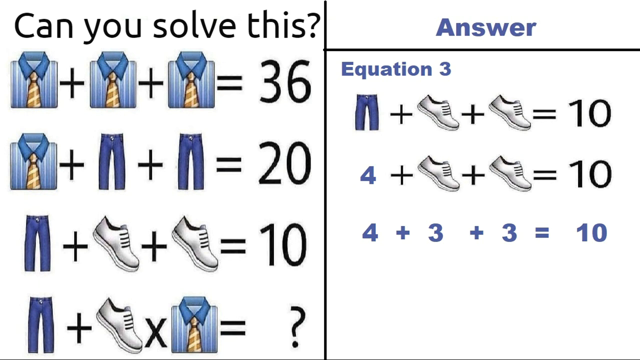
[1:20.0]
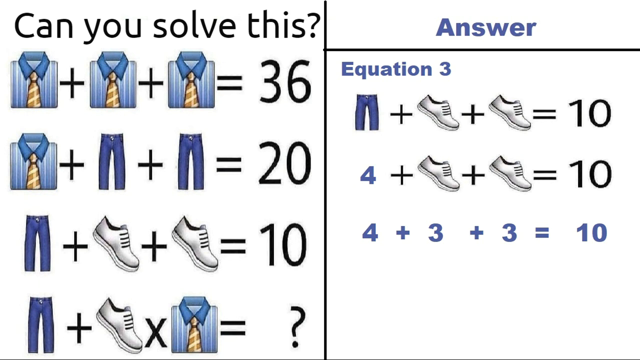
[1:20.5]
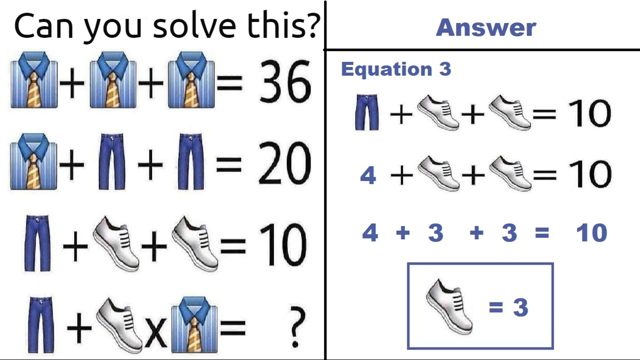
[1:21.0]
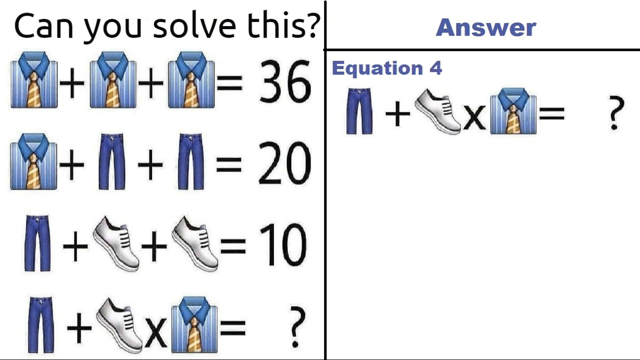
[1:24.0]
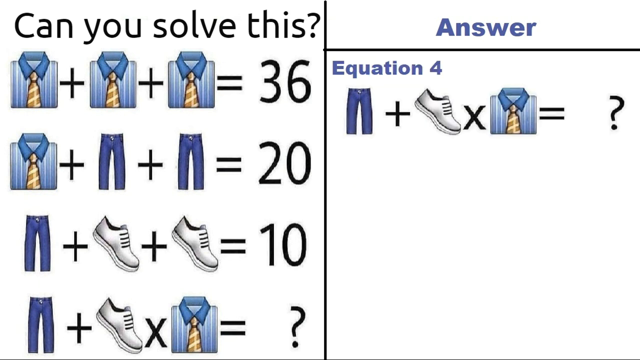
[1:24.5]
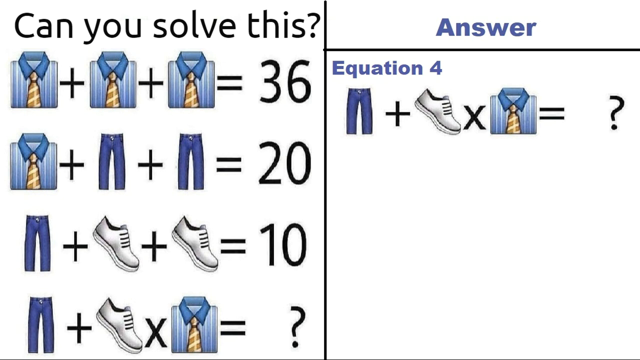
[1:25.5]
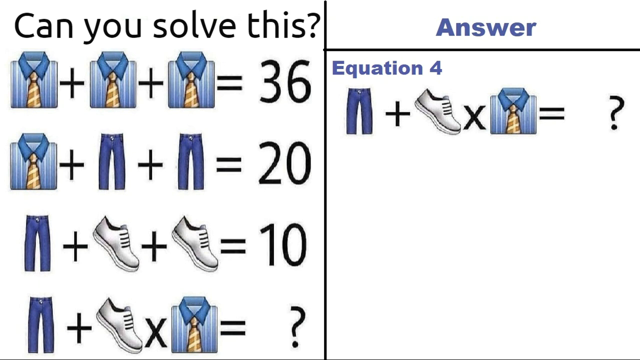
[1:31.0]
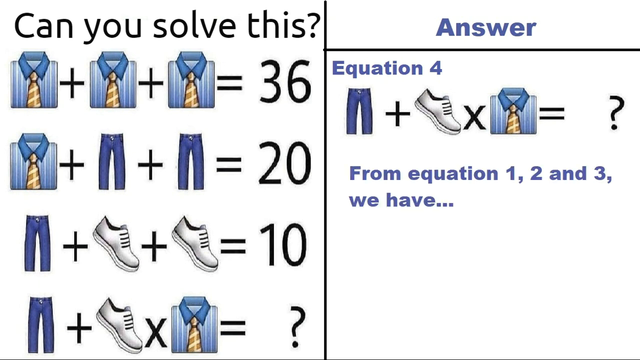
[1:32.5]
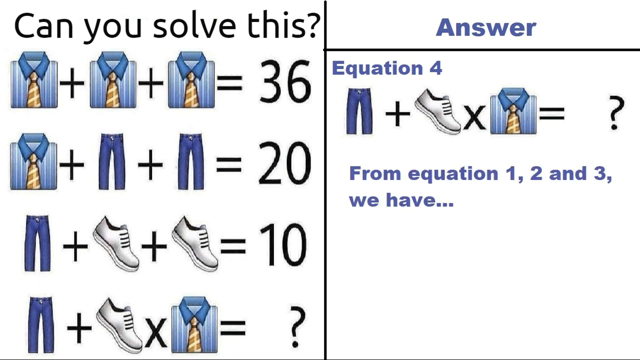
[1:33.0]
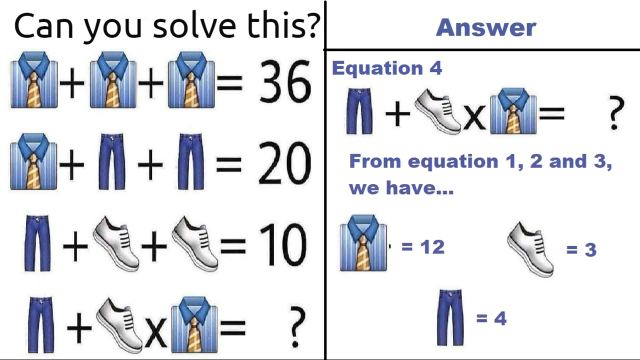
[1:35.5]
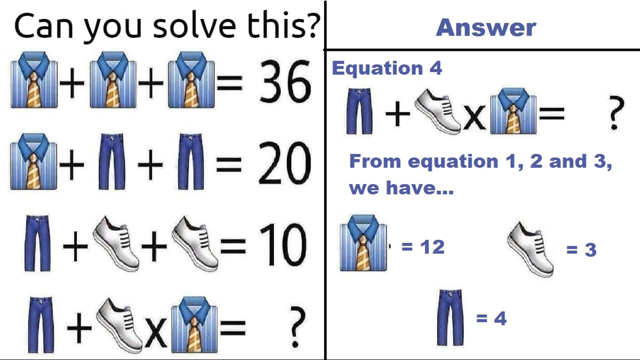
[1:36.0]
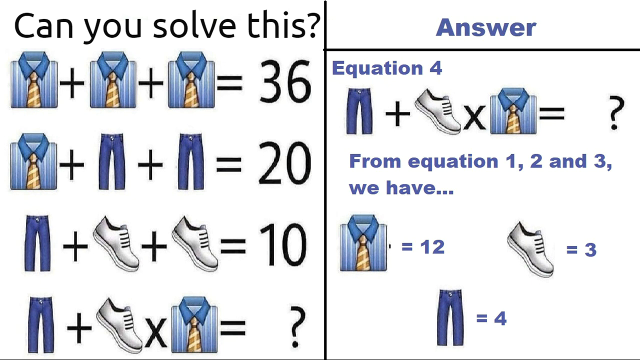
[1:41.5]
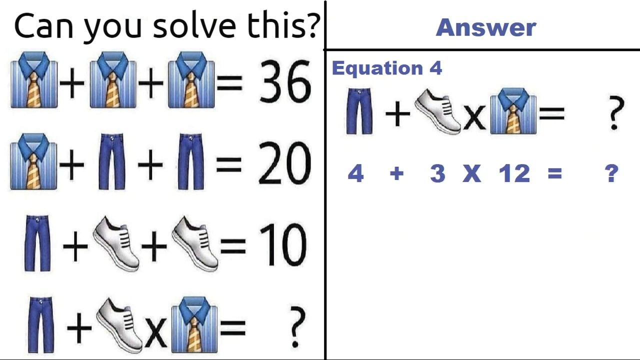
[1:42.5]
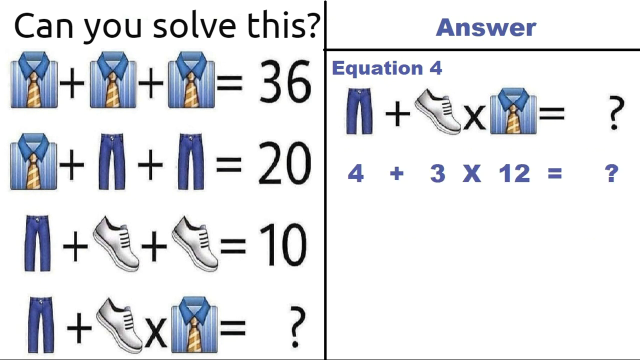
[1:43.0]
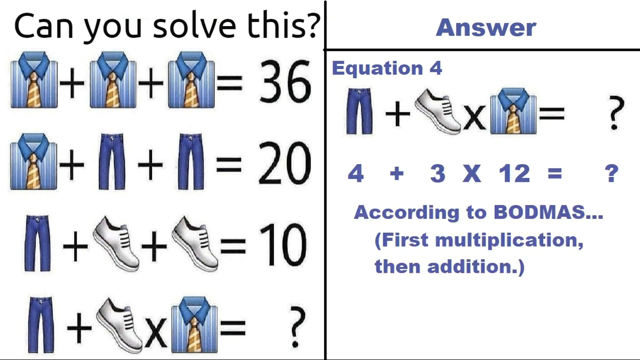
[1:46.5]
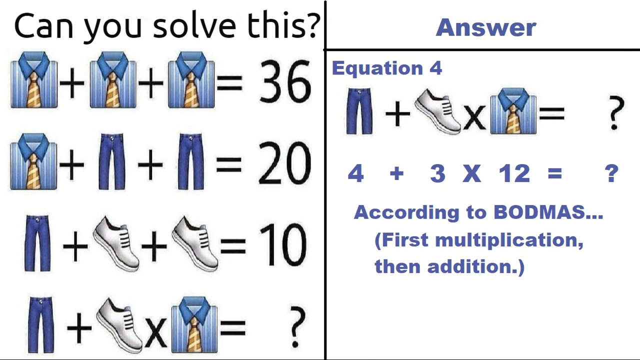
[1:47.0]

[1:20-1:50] Shortly after, beneath the equation four plus three plus three equals 10, the line shoe equals three appears in a white square bordered by dark blue lines. The screen then switches to equation 4, with the heading Equation 4 in dark blue and the equation 1 pants plus shoe times striped shirt equals question mark, with the symbols all in black. About six seconds later a new line appears reading "From equation 1, 2, and 3, we have". Beneath it, one striped shirt equals 12 is on the left and one shoe equals three is on its right, and beneath both, in the middle, is one pants equals four. All the letters are in dark blue. The symbols then disappear and are replaced by the equation 4 plus 3 times 12 equals question mark, all in dark blue. Below this equation it reads "According to BODMAS", followed by a quick explanation: "First multiplication, then addition."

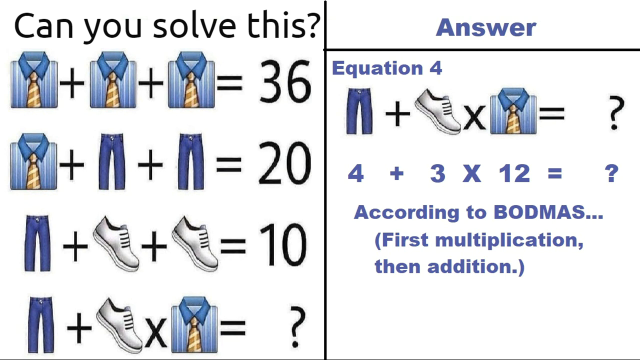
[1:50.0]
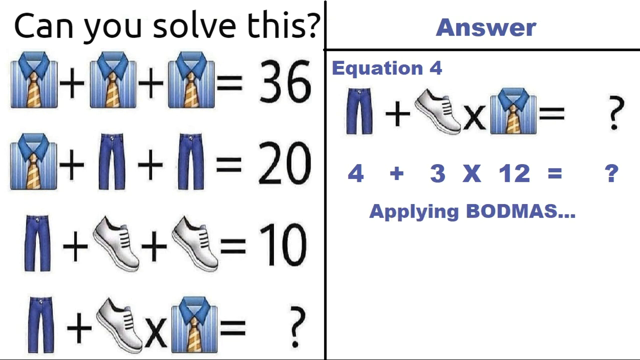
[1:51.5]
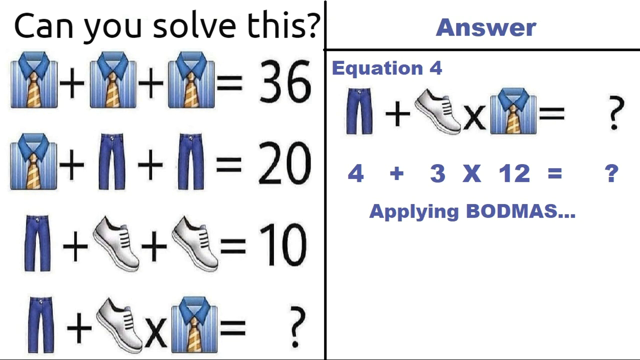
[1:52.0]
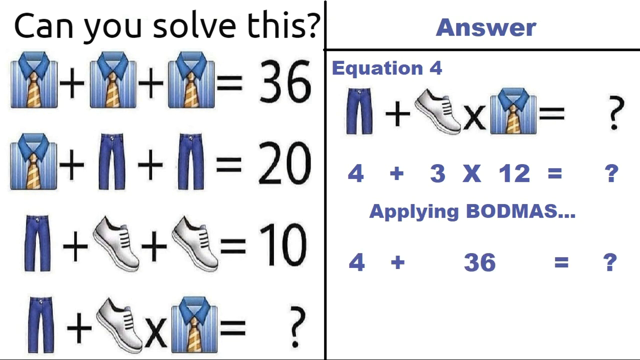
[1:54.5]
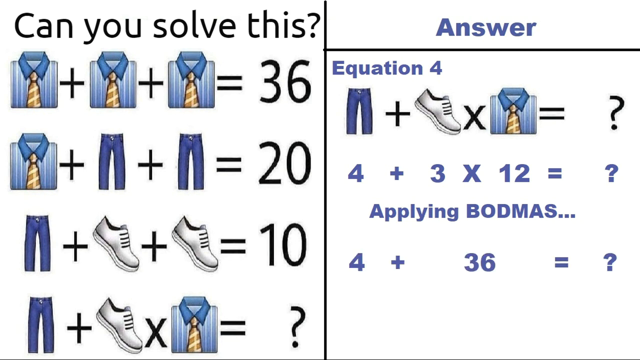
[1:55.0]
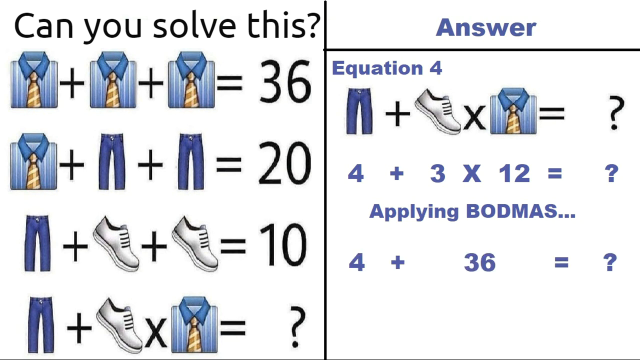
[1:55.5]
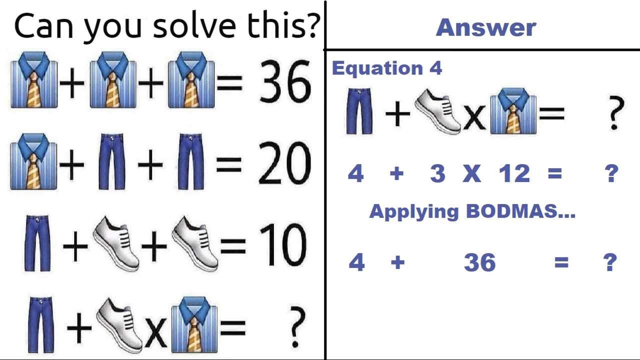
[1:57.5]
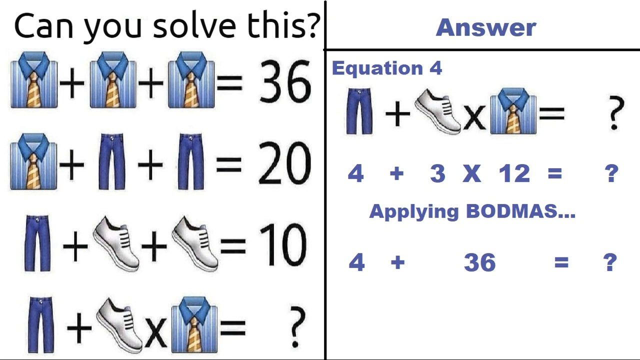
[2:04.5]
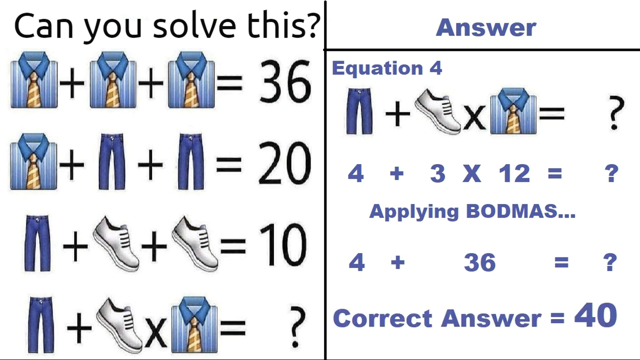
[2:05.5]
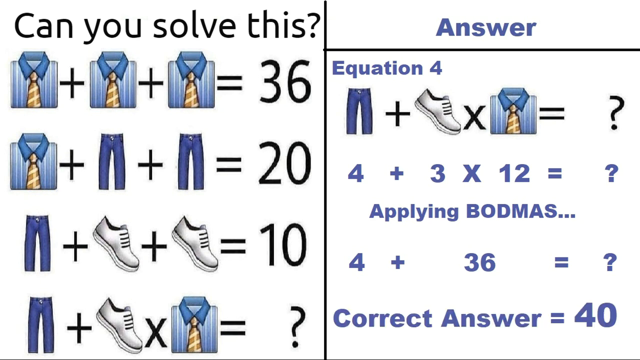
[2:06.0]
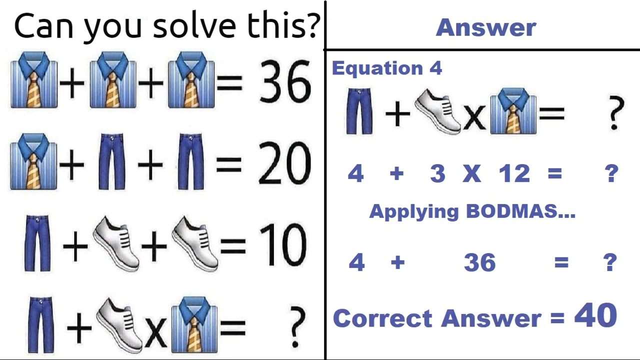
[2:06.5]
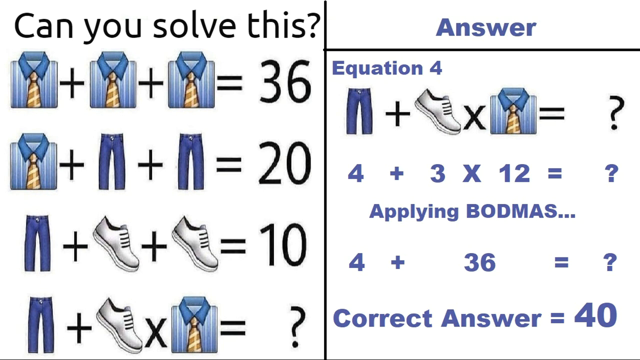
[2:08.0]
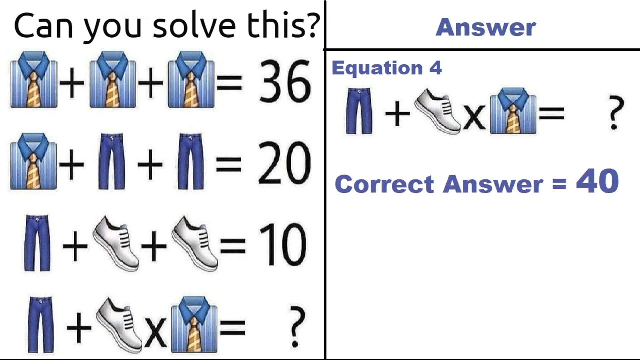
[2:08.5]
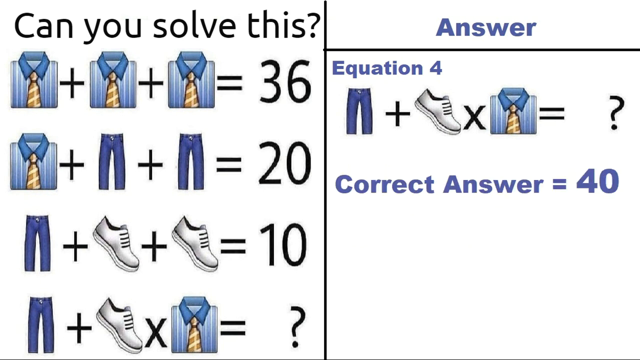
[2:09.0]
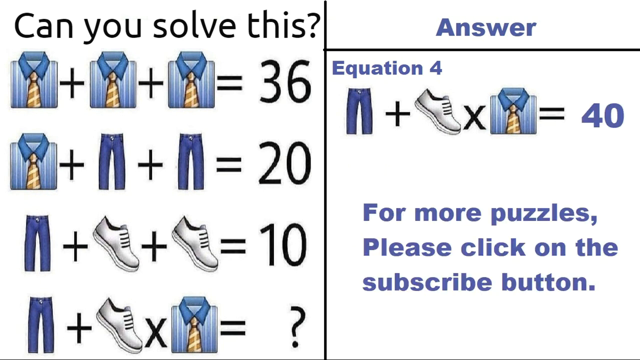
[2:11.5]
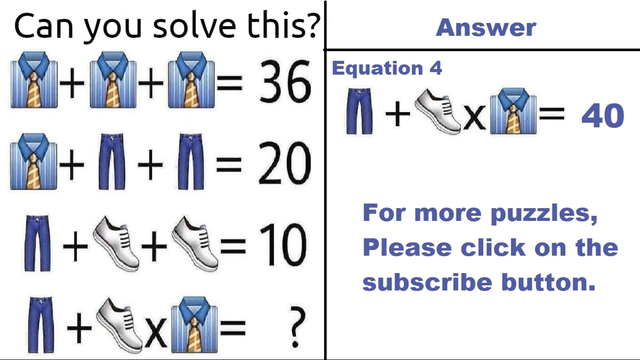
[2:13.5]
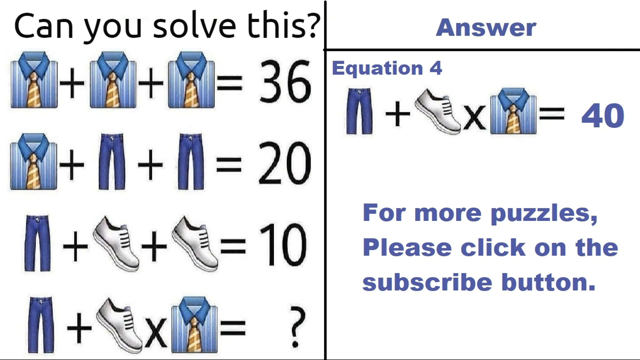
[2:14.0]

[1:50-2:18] Very shortly, the line "According to BODMAS... (First multiplication, then addition)" is replaced by the line Applying BODMAS..., and a new equation, 4 plus 36 equals question mark, appears beneath it, all in dark blue. About 10 seconds later it is followed by the line "Correct answer equals 40", also in dark blue. All the equations then disappear, leaving only the line "Correct answer equals 40" in a slightly larger font, still in dark blue. That line disappears too, and the number moves into the original equation to replace the question mark, so it reads one pants plus one shoe times one striped shirt equals 40, with the 40 in dark blue. Beneath that equation a line appears reading "For more puzzles, please click on the Subscribe button."